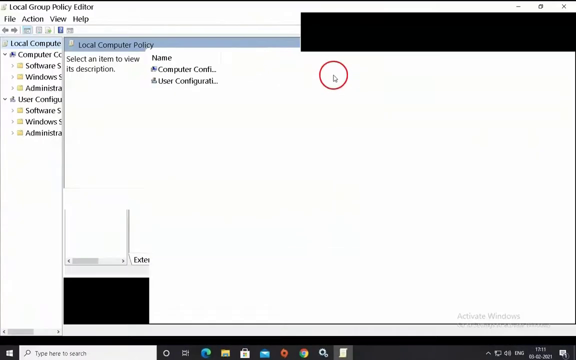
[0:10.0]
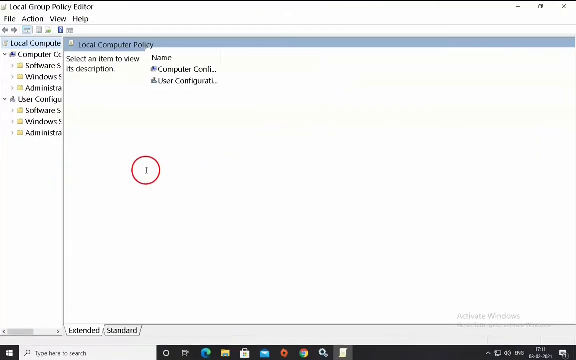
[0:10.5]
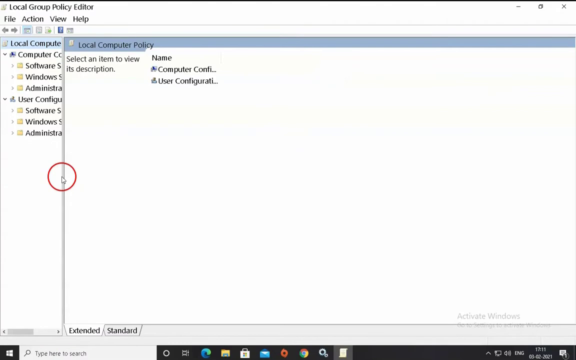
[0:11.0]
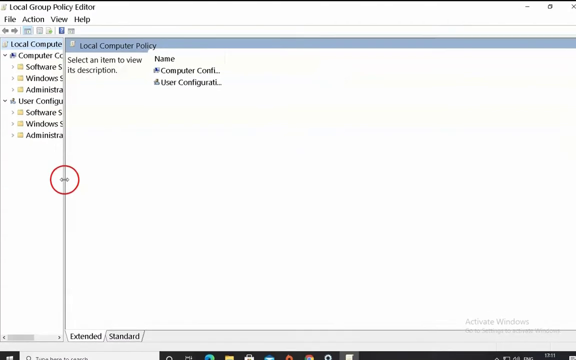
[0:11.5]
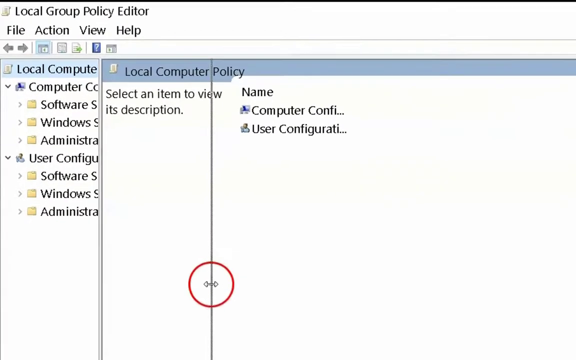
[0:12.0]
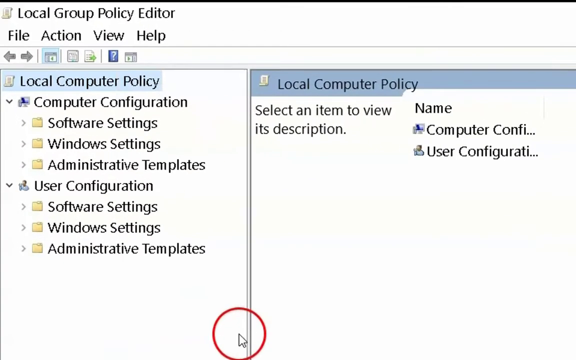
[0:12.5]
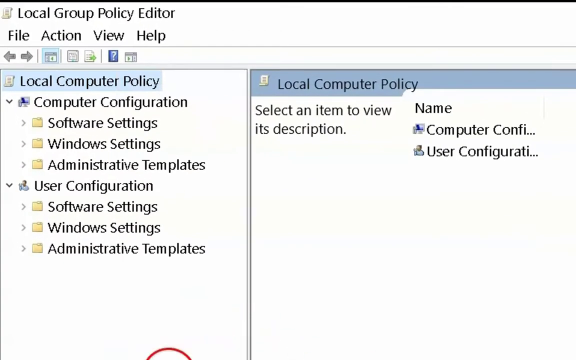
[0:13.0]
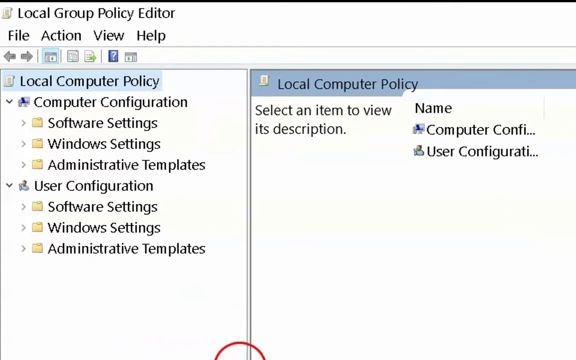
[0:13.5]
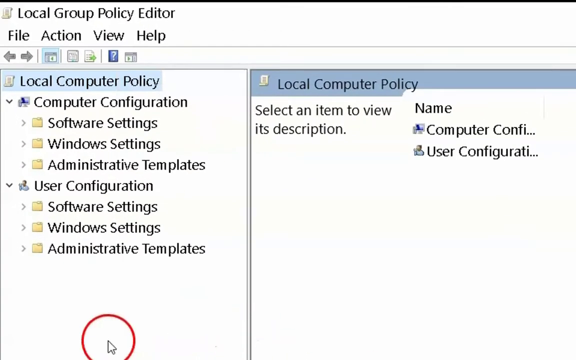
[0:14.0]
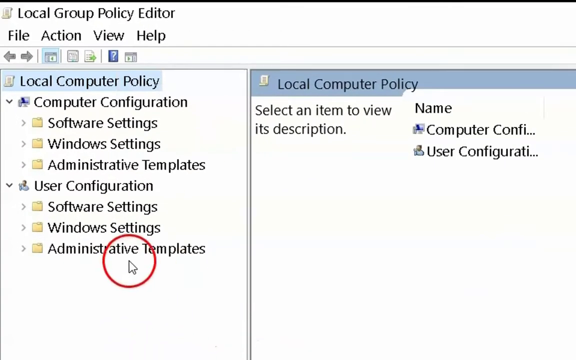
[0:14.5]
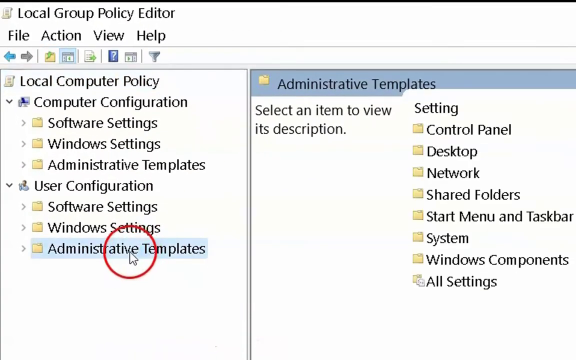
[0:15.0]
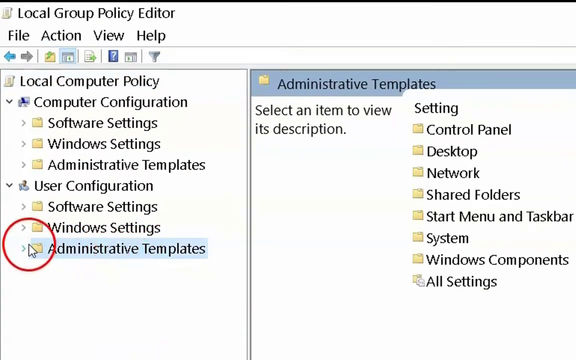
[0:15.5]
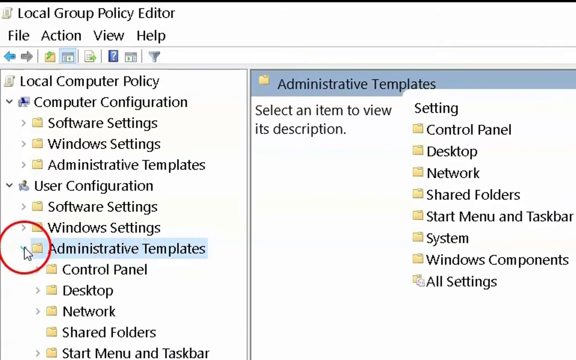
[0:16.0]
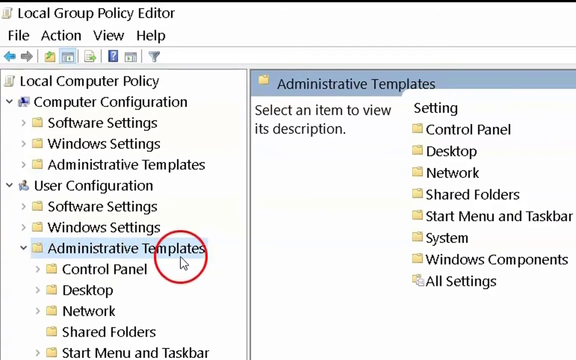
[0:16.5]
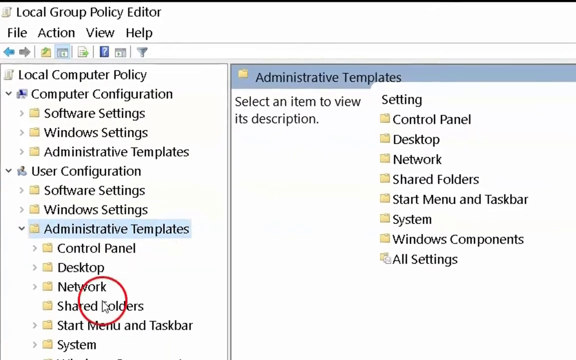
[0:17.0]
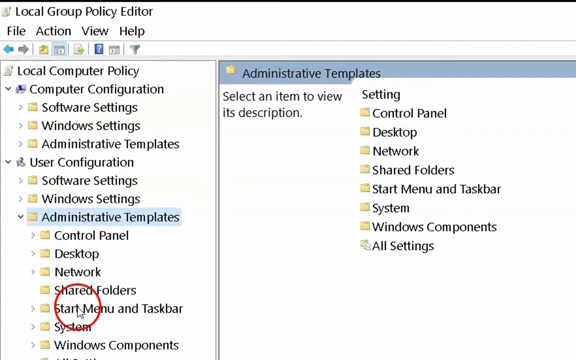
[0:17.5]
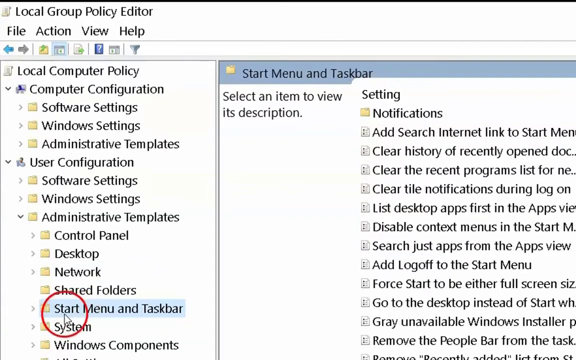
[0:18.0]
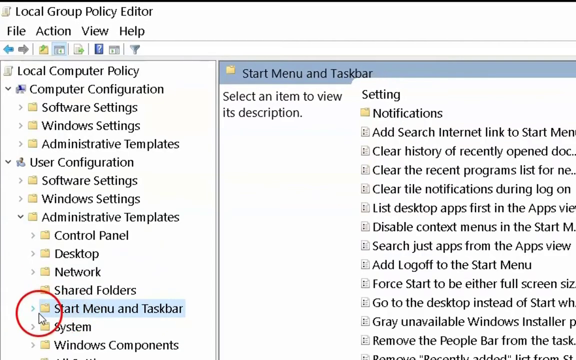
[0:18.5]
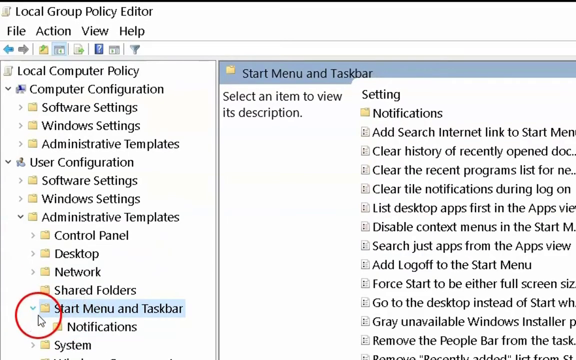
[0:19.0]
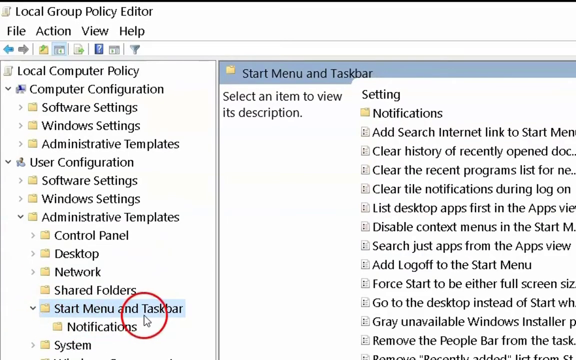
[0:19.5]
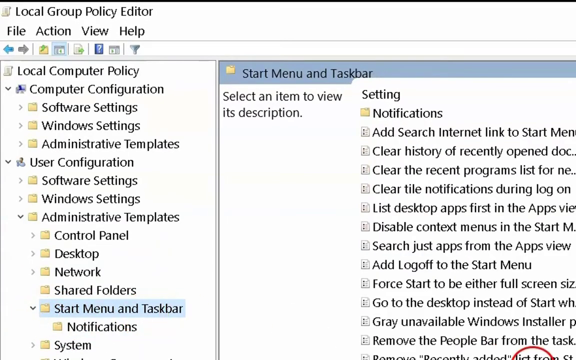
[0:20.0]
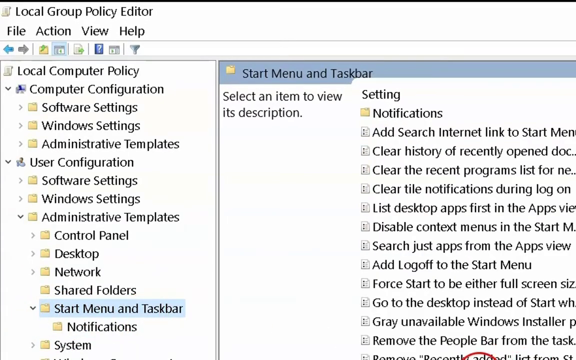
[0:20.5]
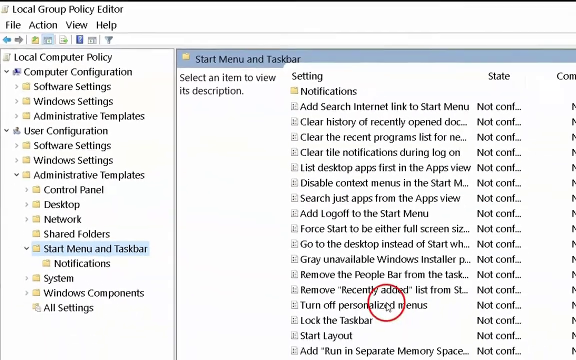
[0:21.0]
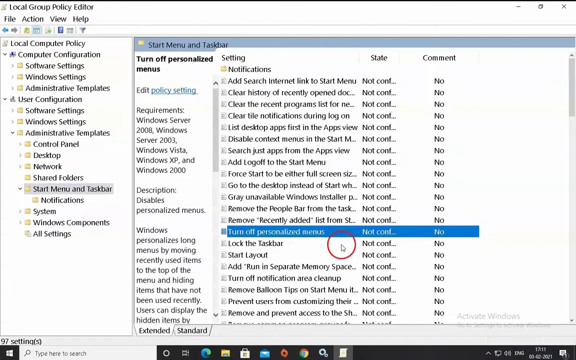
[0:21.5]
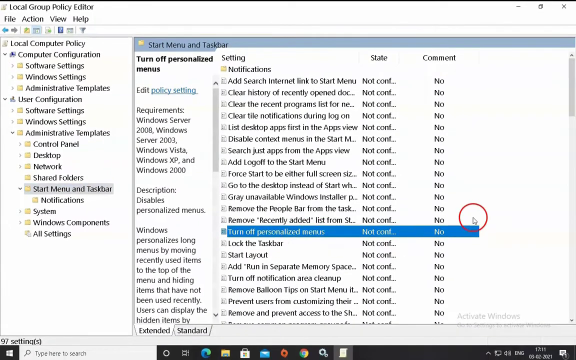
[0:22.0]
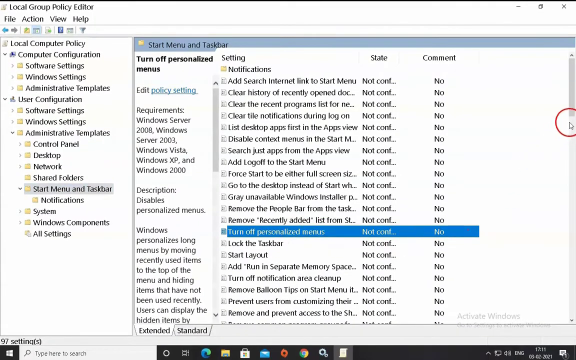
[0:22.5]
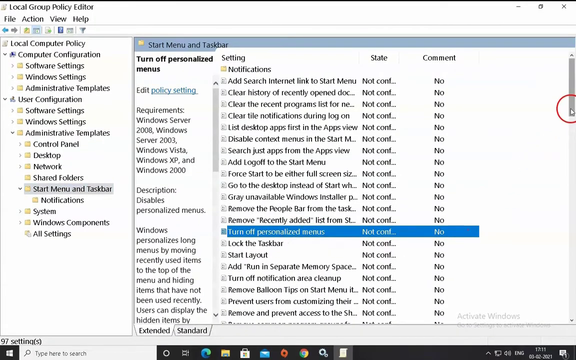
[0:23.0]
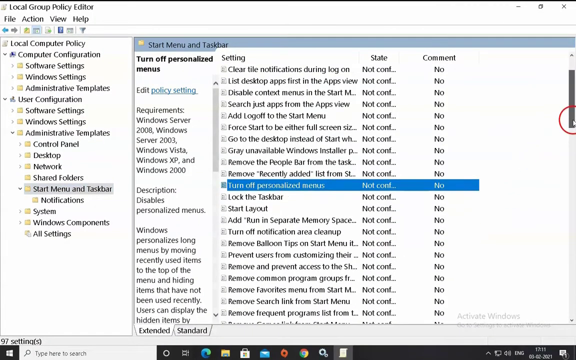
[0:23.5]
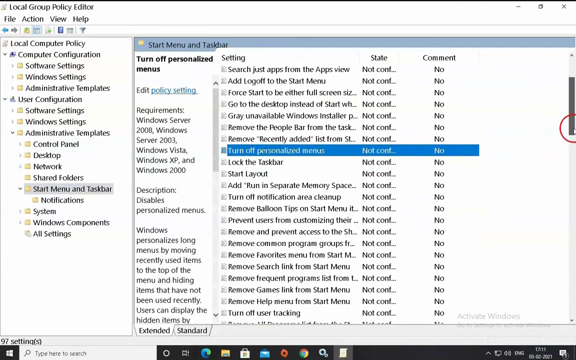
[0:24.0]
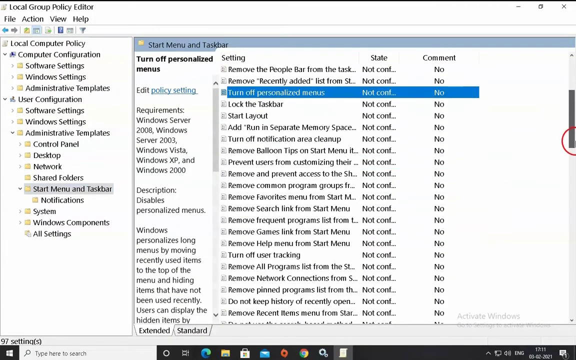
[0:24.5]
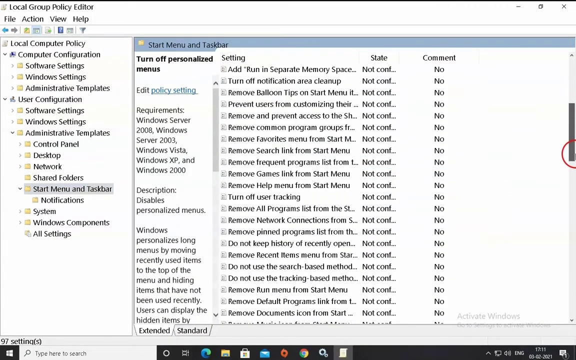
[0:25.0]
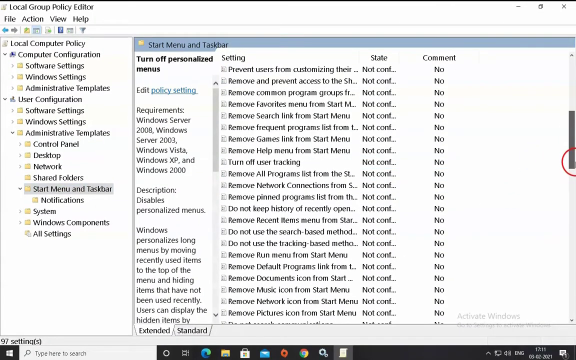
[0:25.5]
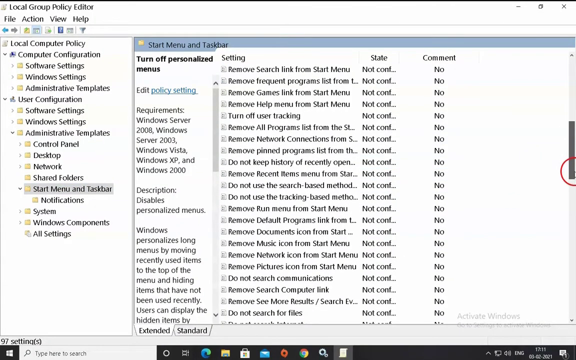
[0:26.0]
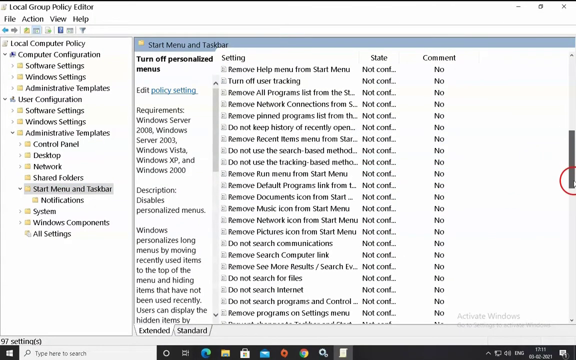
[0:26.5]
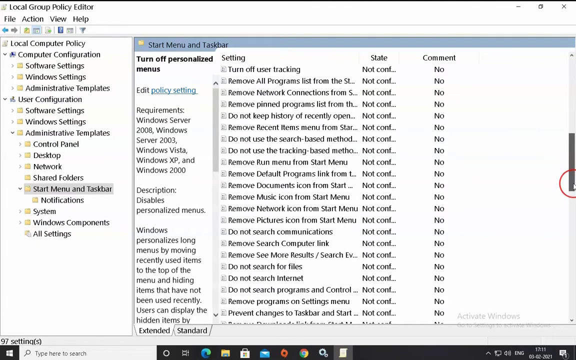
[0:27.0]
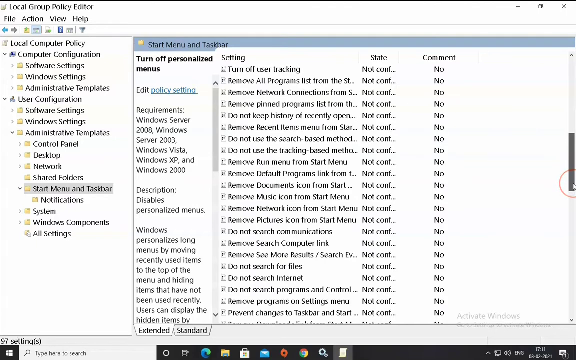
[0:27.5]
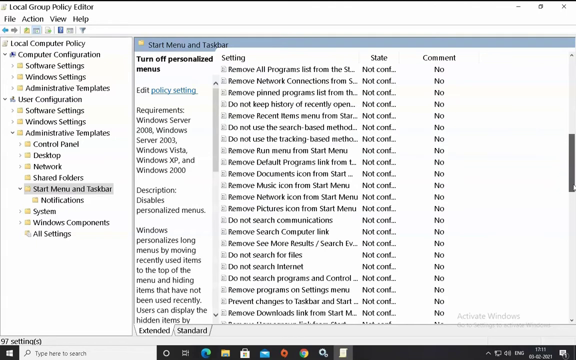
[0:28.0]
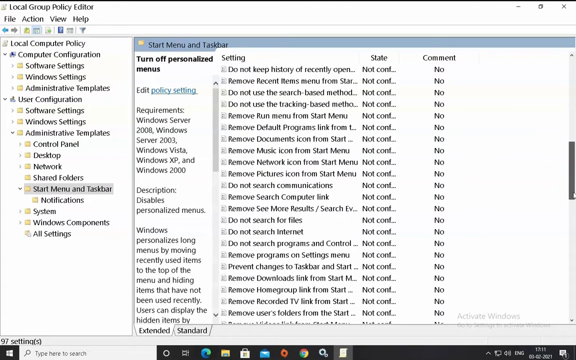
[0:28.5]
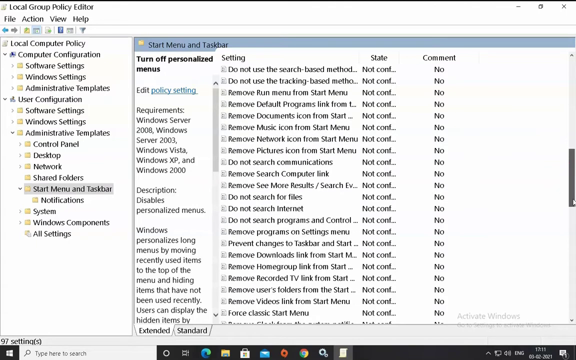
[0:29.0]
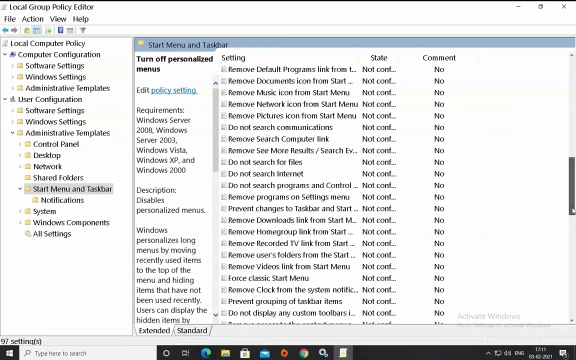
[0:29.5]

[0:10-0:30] A computer window shows "local group policy editor" and "local computer policy," with the text "select an item to view as description" and the items "User configuration" and "computer configuration." There is a pointer with a red circle. The screen has two white pages open, and it is running Windows administration software. No person is shown, only the screen, though there is probably a person because there is motion on the screen. It looks like they are creating something, possibly a document or presentation for others to read. There is nothing in the background behind the screen. The scene on the computer looks historical and ancient.